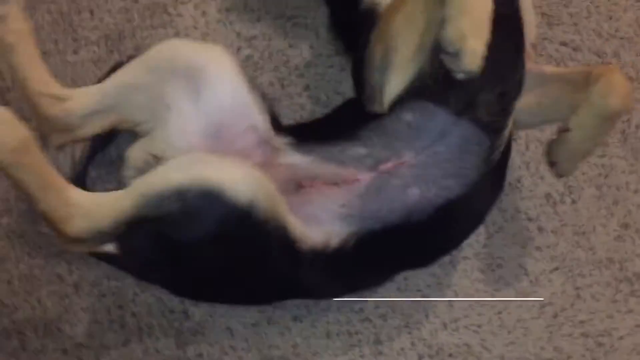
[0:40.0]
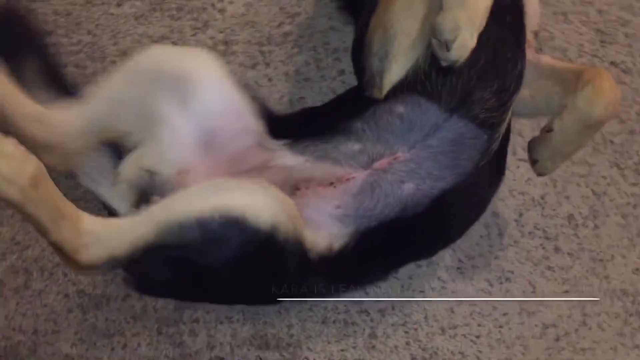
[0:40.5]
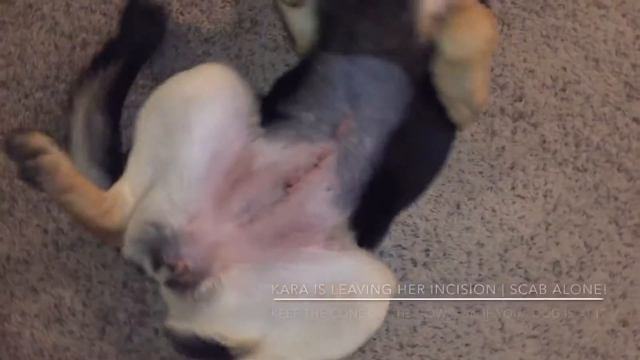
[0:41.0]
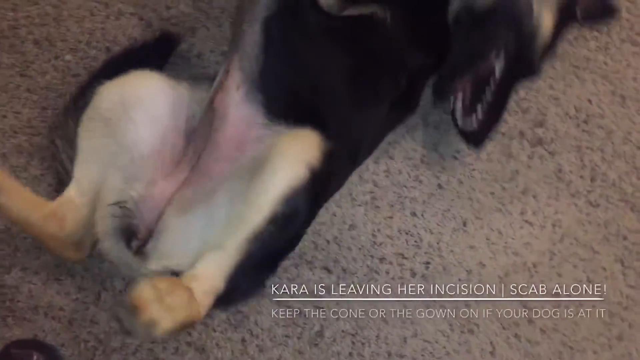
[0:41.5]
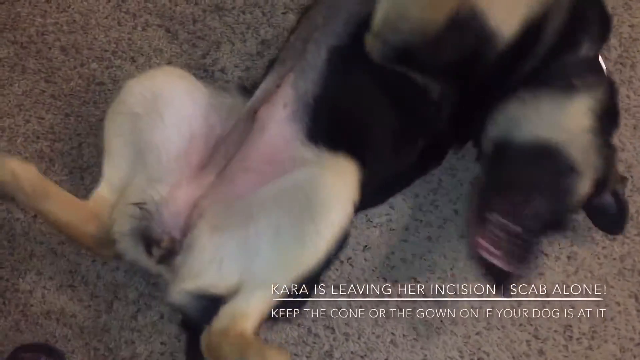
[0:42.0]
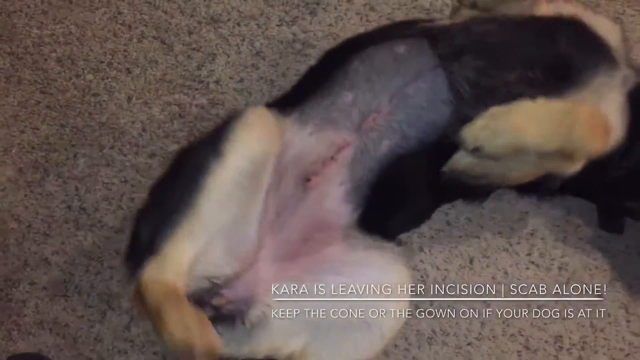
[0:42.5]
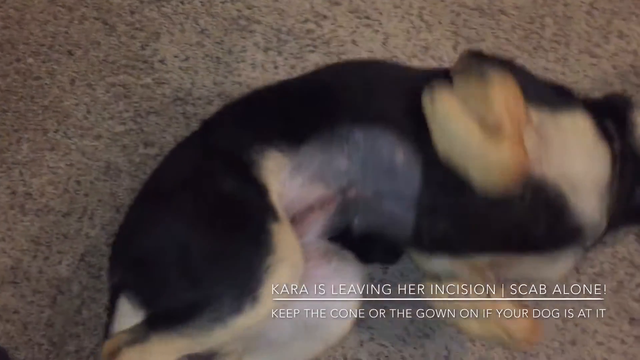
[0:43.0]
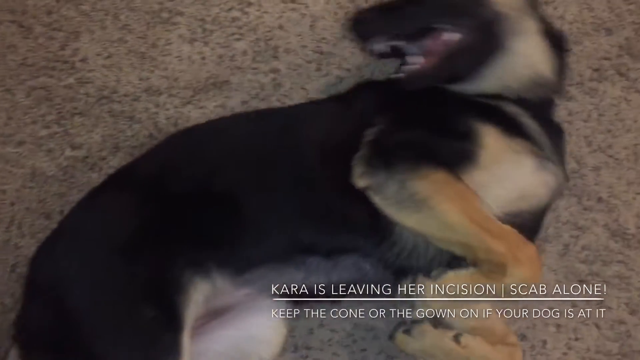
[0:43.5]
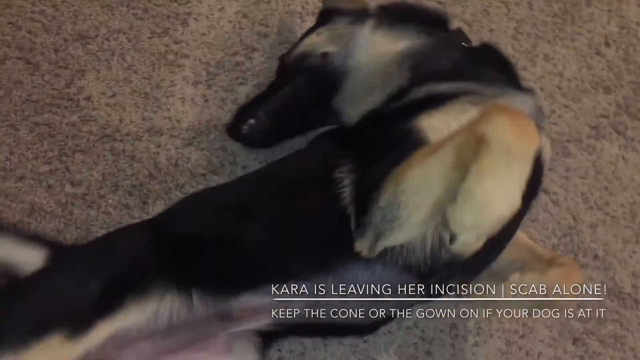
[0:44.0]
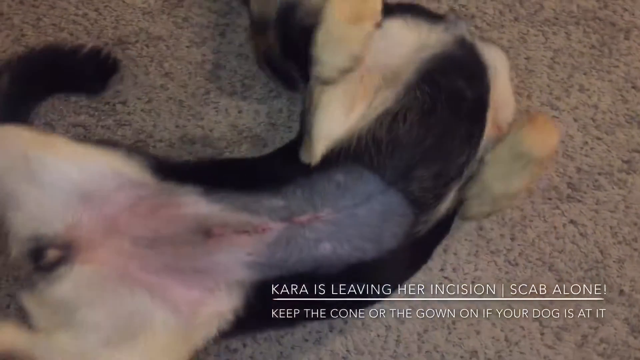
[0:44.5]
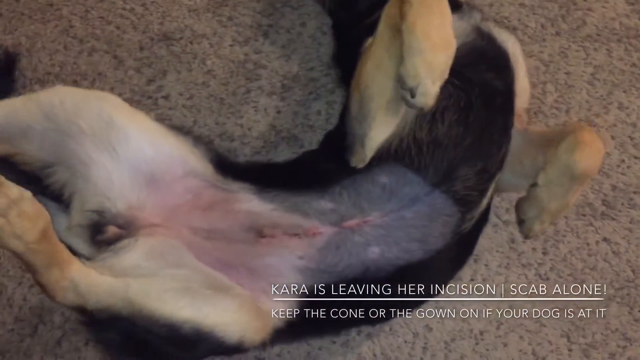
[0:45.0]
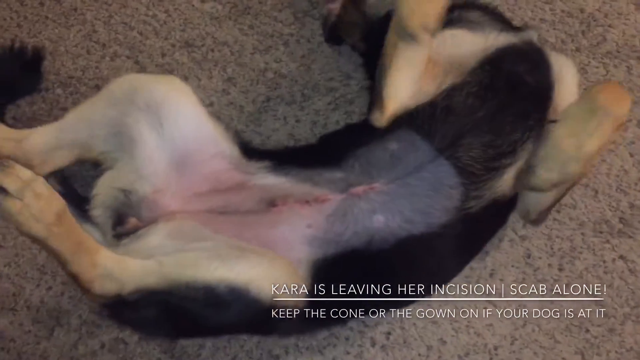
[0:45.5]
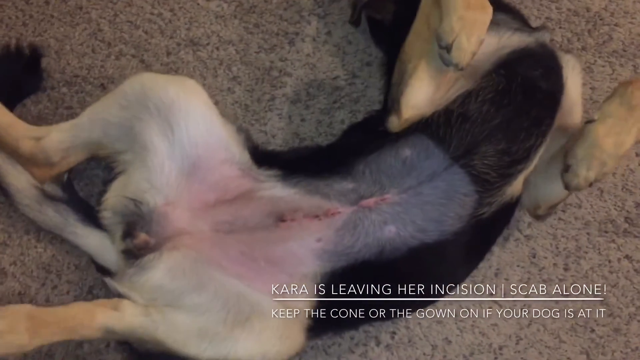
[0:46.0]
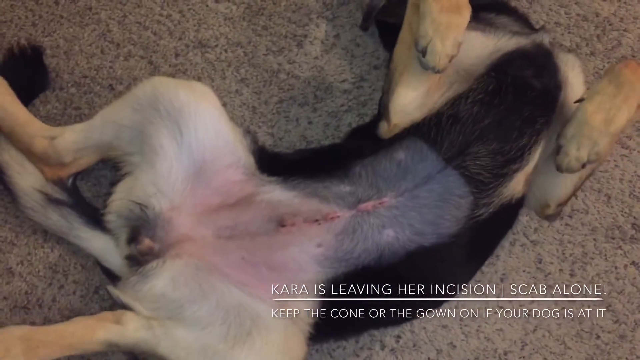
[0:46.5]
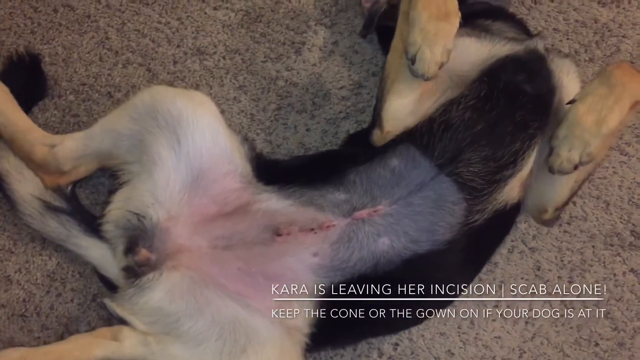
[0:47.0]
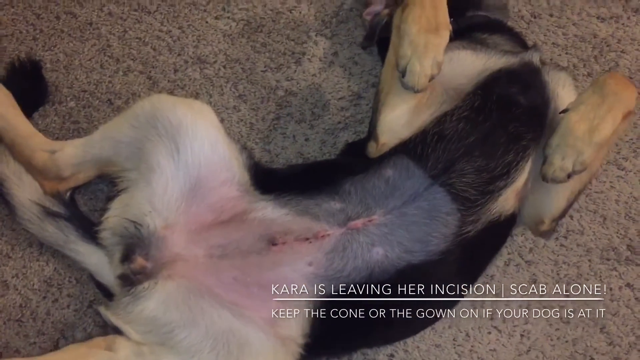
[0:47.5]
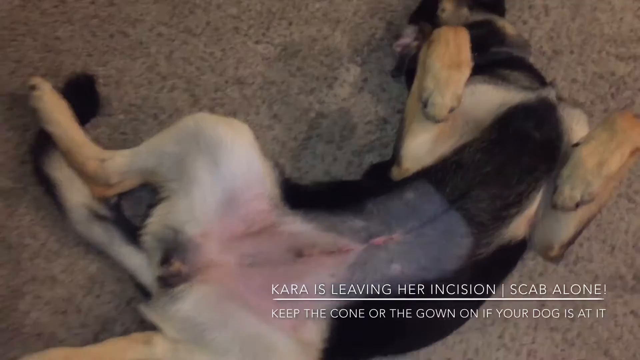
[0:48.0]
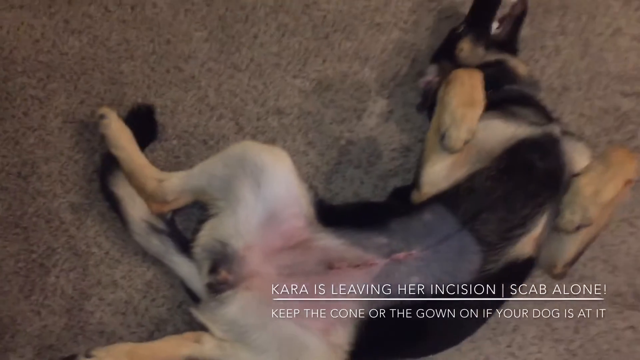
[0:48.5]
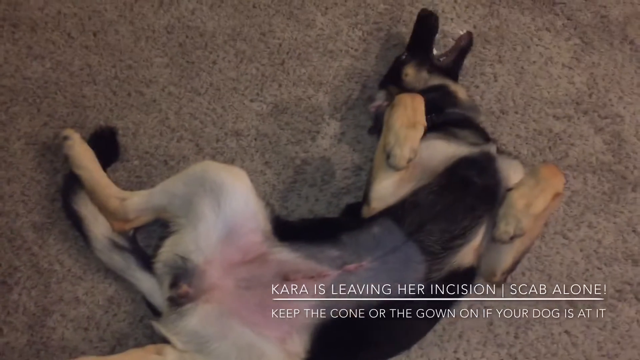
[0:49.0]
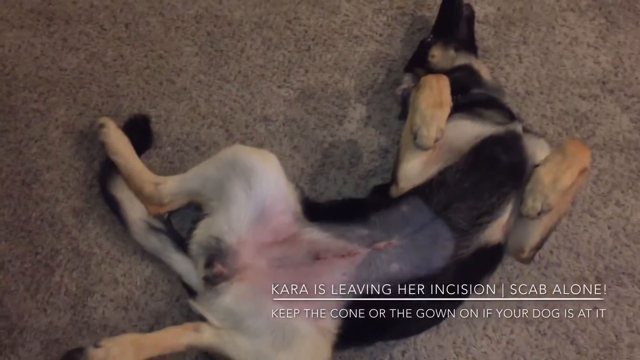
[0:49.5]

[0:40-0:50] The dog, white with black markings, is playing on its back on a brown carpet, scratching its back against the carpet. There is a close-up of the incision, with the stitches visible. The dog kicks its leg and slides on the floor as if trying to move its head toward its legs, close to its stomach, then slides as it moves its head to the other side. It kicks its legs as it rotates itself, moving in a snake-like fashion, then lies on the spot, breathing heavily. The camera zooms out, and a close-up shows the dog with its legs and arms folded.